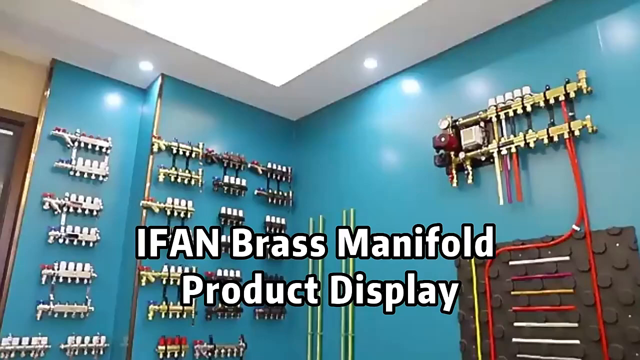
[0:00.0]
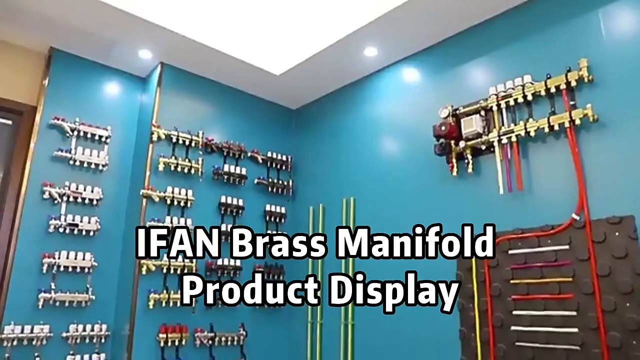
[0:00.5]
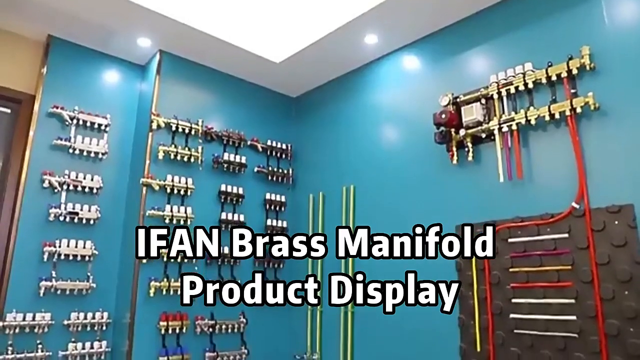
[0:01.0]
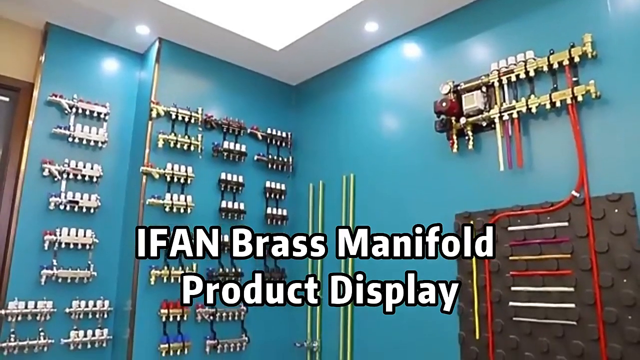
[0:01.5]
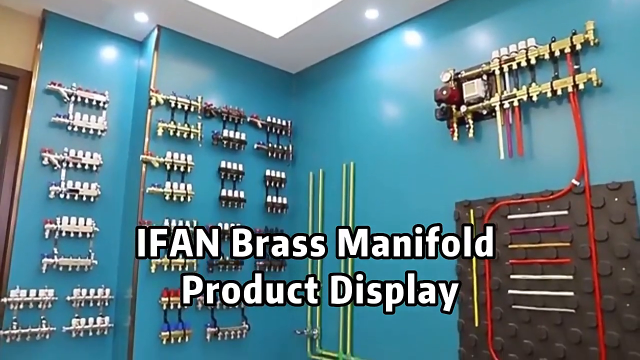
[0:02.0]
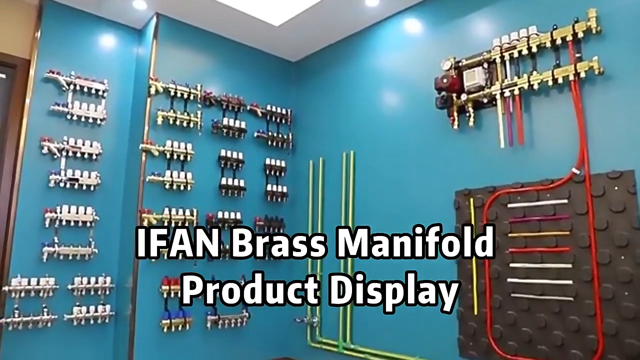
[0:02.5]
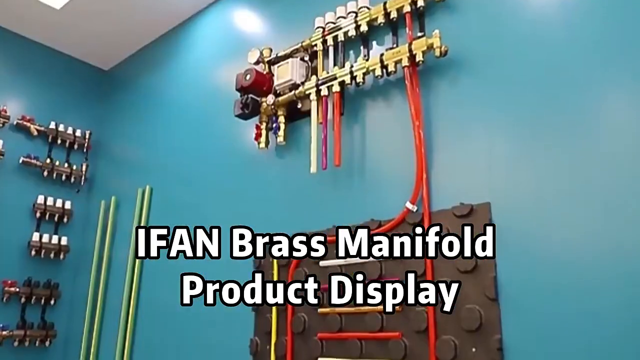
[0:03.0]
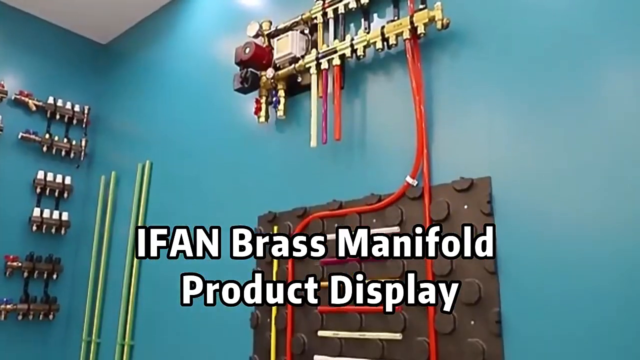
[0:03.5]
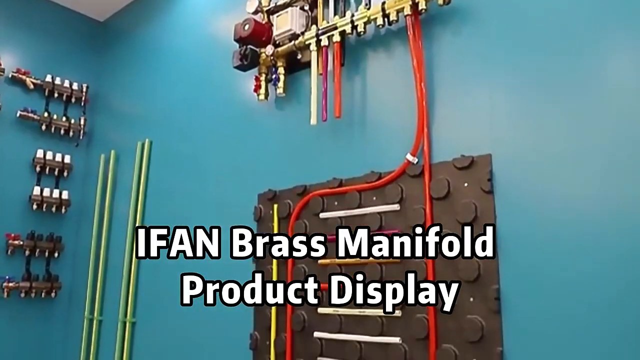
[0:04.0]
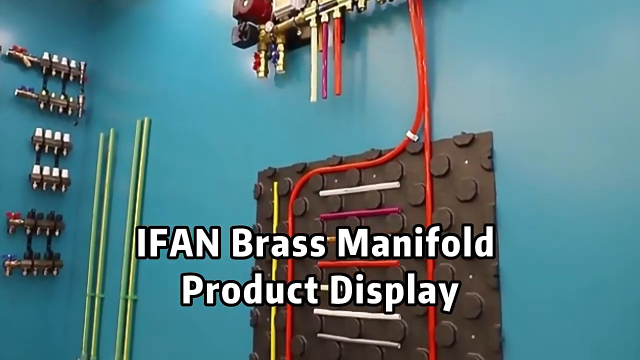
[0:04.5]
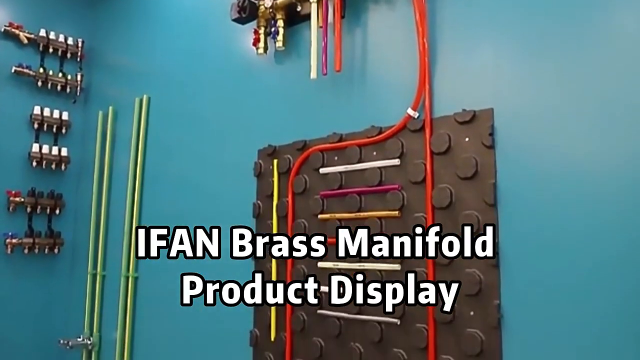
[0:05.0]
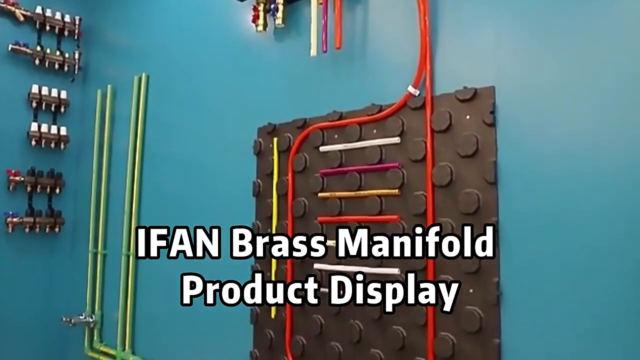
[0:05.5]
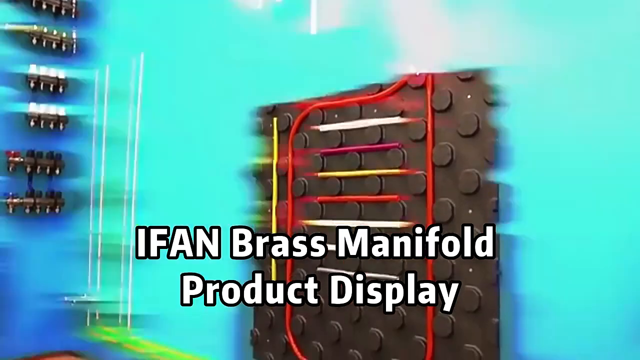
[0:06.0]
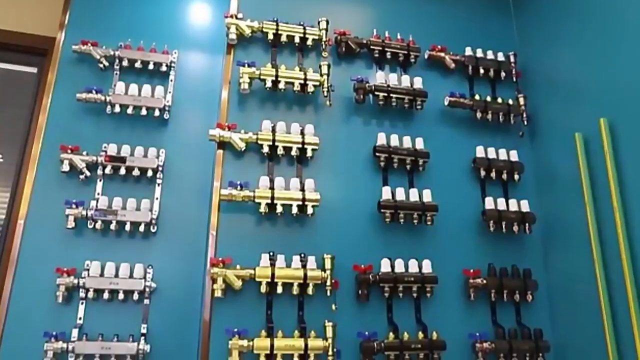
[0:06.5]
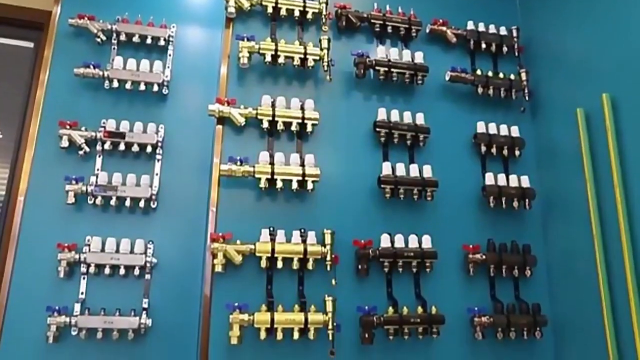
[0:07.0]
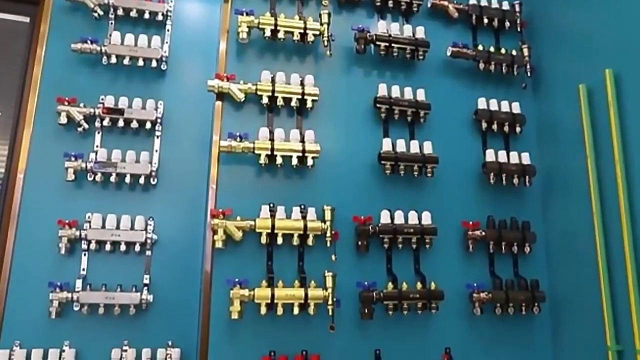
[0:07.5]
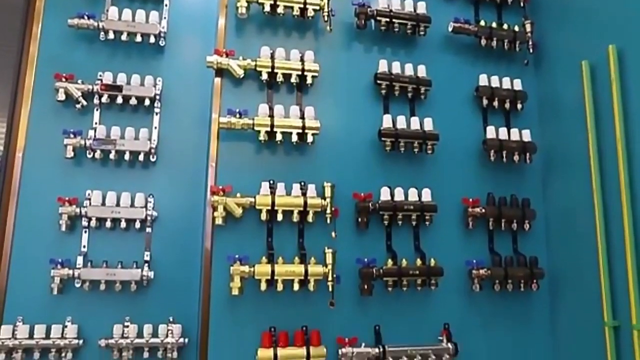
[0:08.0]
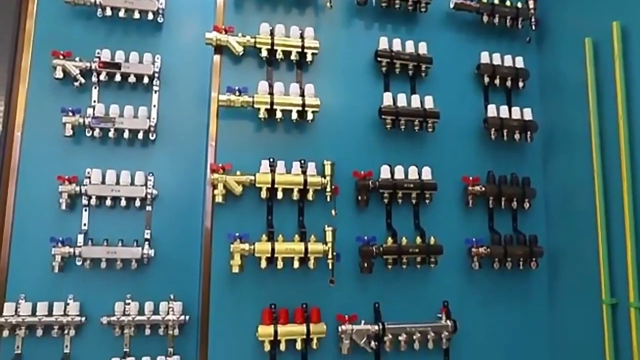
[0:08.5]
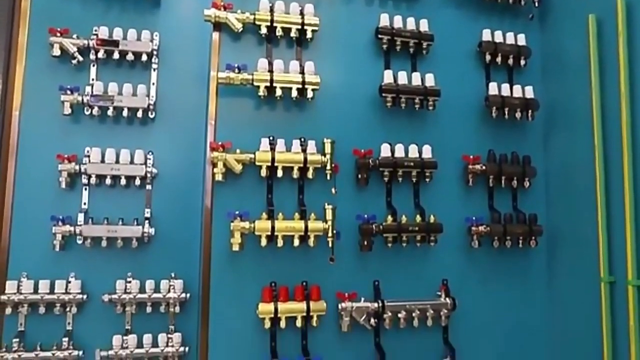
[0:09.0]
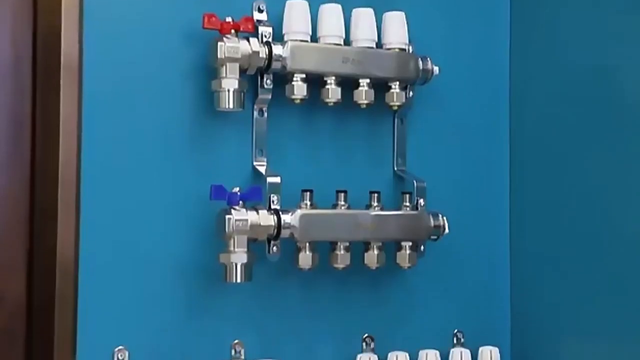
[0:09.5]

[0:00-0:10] A title on the video reads "IFAN Brass Manifold Product Display." The room has a wall painted a medium shade of blue and a white ceiling. Several very shiny brass pieces are attached to the wall, and all of the products look completely brand new, as if they have never been used. Near the right side, some red hoses hang down to the ground. There is a square-shaped item with circles on it, and the hoses go through those circles; the hoses look like they can be shaped any way a person would like. There are cut pieces of hose in white, burgundy, yellow, red, and gray. Some of the fittings look like they have a spigot and a place to turn them on and off. There is also a square-shaped item that can be turned on and off.